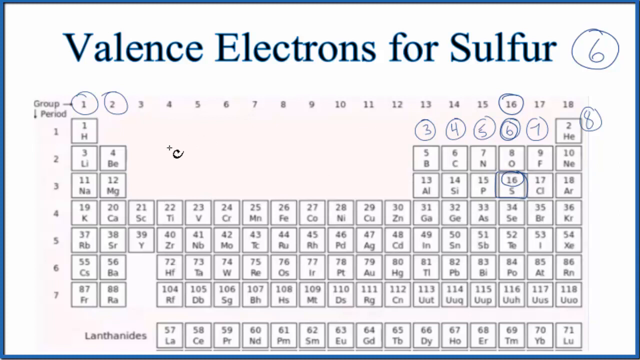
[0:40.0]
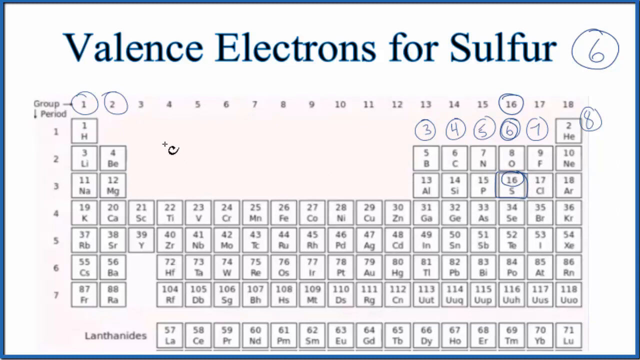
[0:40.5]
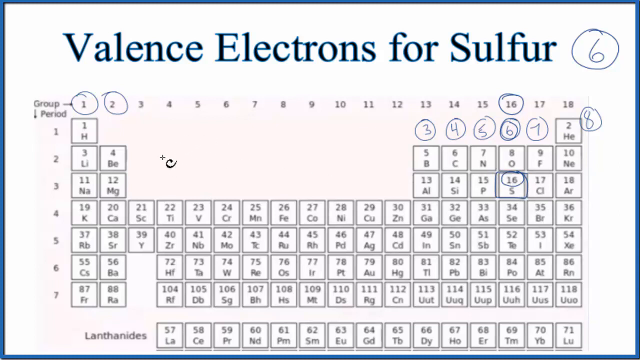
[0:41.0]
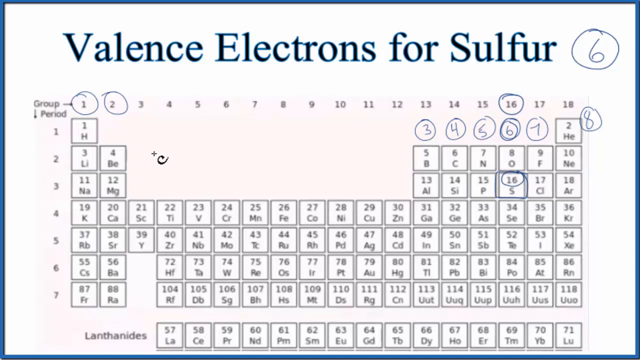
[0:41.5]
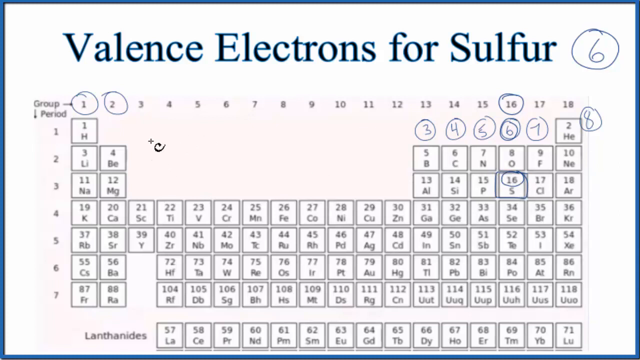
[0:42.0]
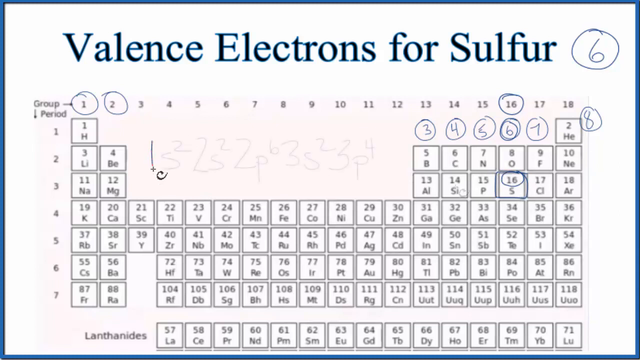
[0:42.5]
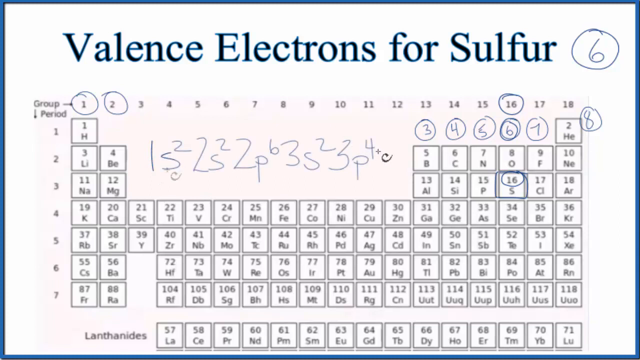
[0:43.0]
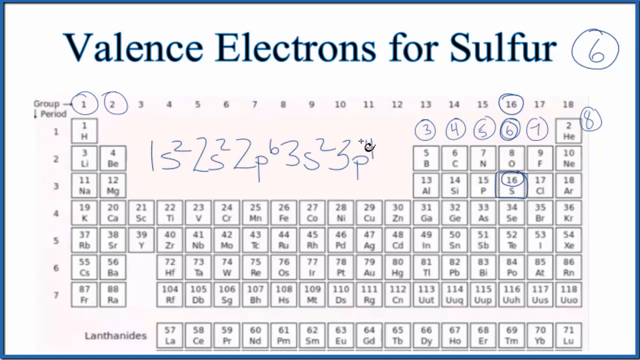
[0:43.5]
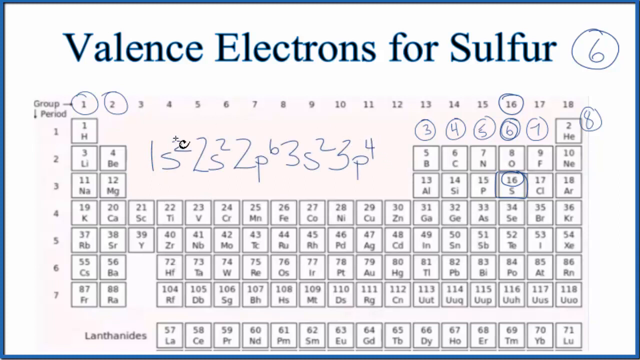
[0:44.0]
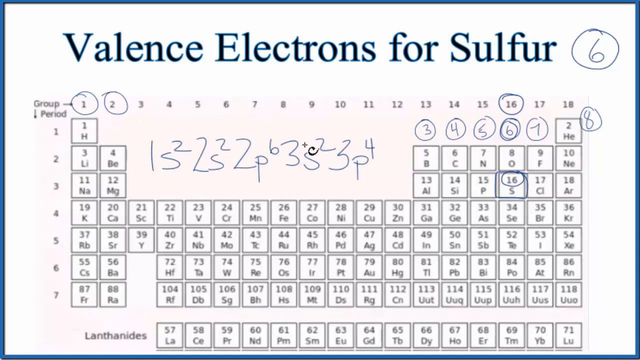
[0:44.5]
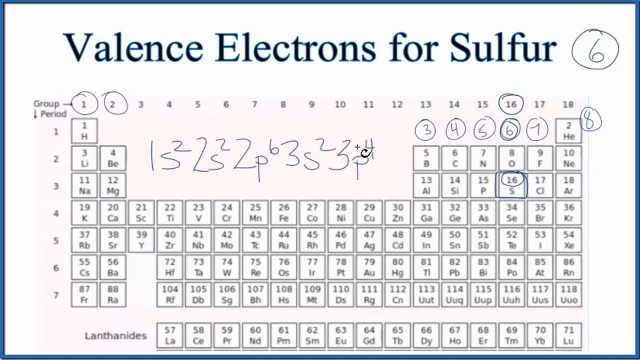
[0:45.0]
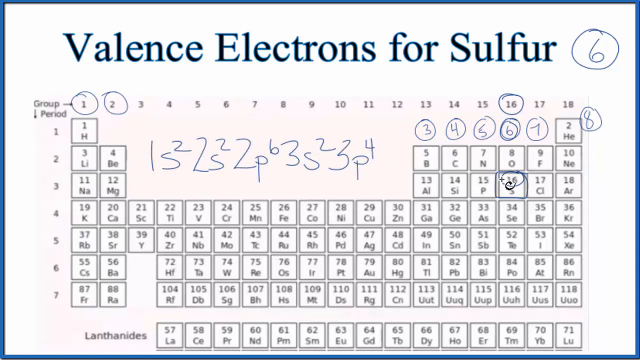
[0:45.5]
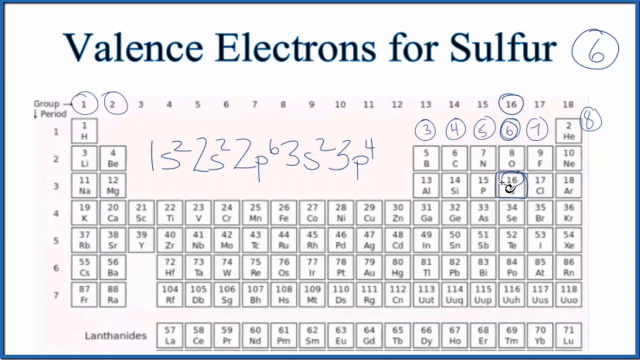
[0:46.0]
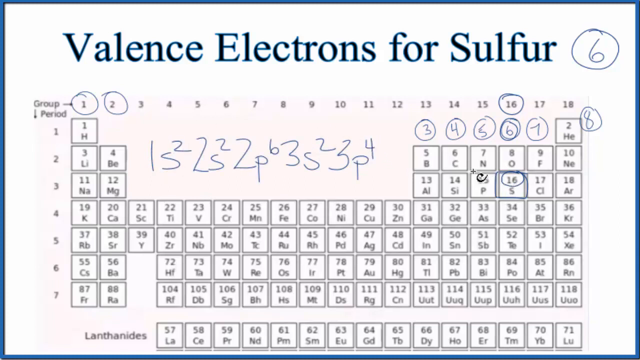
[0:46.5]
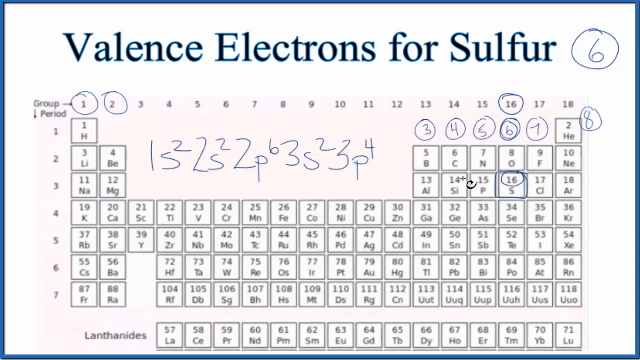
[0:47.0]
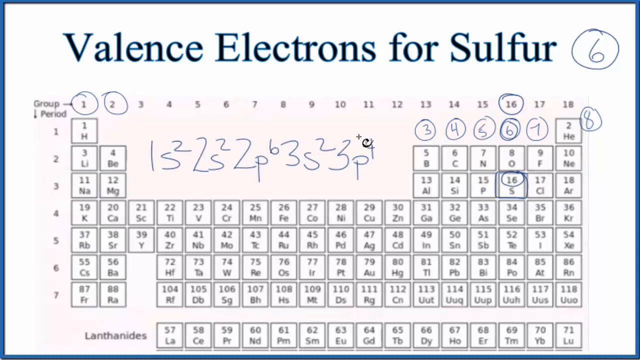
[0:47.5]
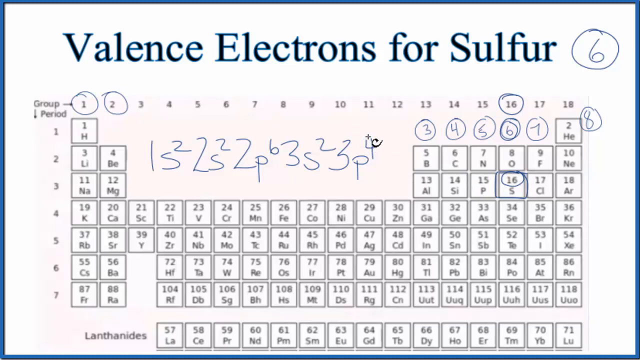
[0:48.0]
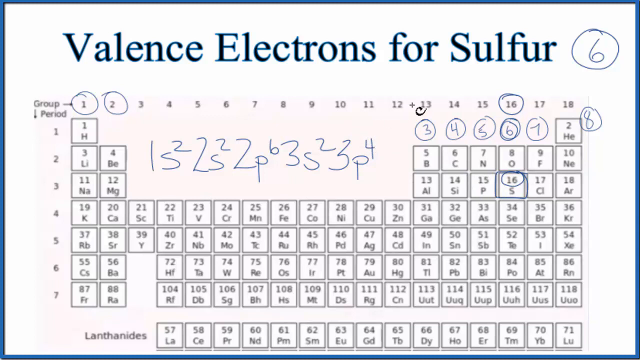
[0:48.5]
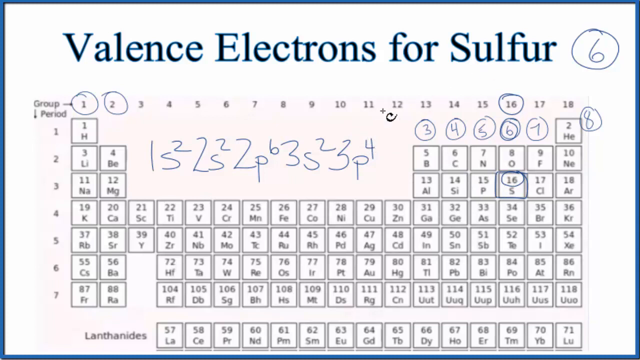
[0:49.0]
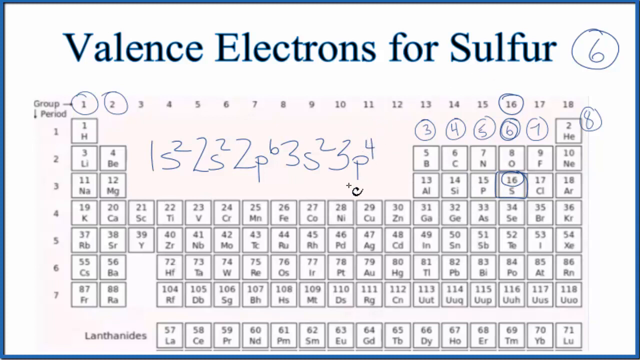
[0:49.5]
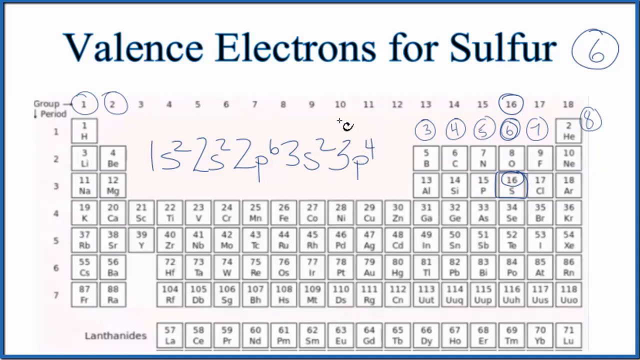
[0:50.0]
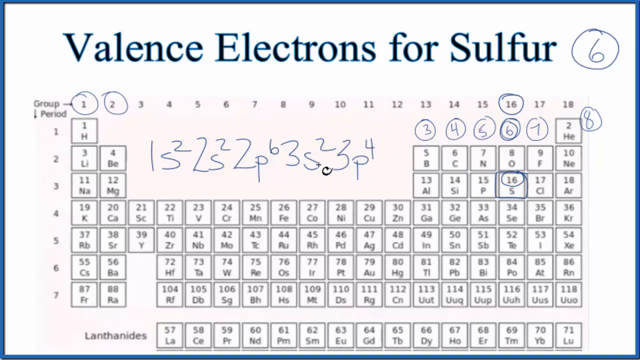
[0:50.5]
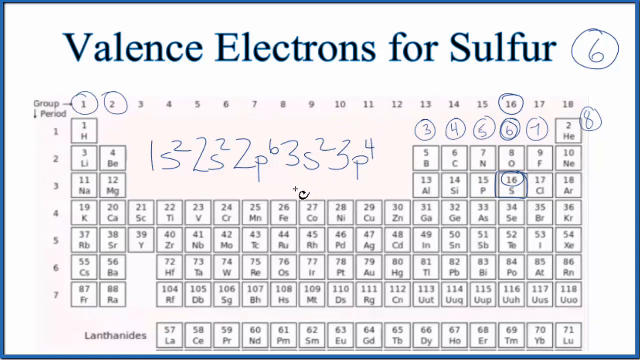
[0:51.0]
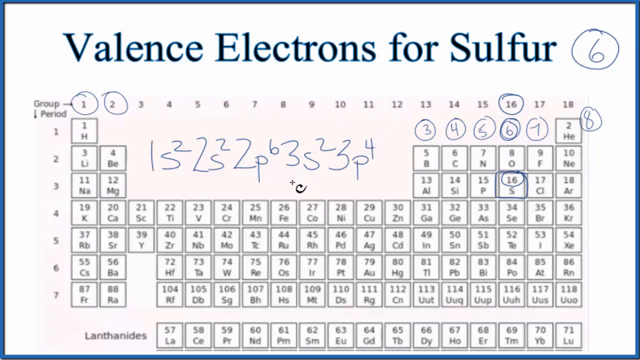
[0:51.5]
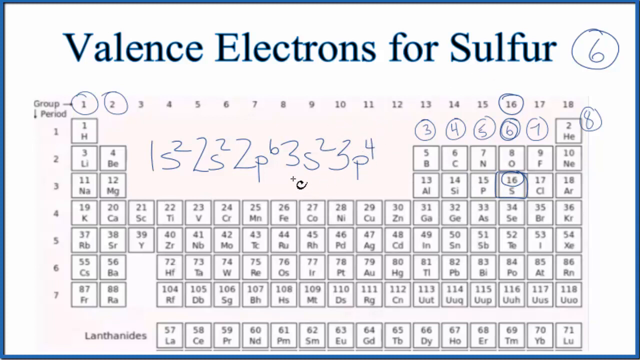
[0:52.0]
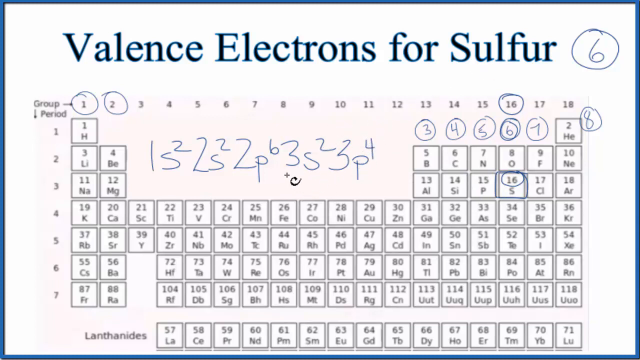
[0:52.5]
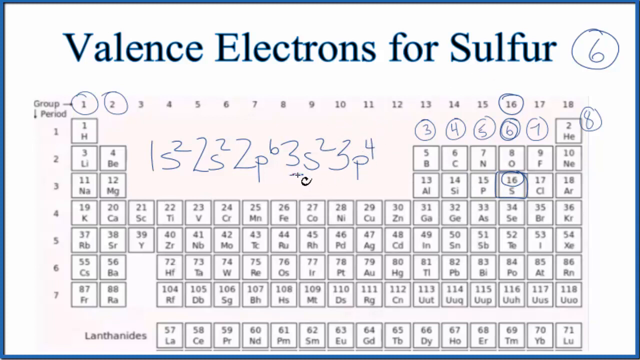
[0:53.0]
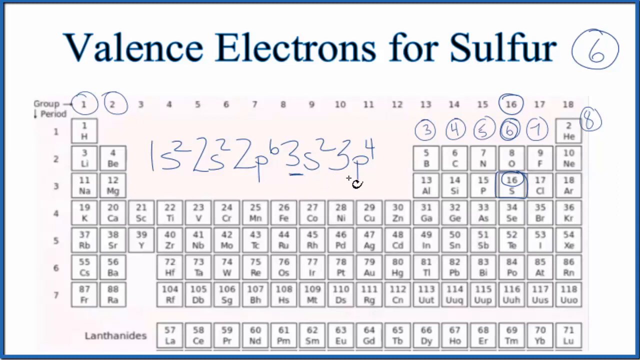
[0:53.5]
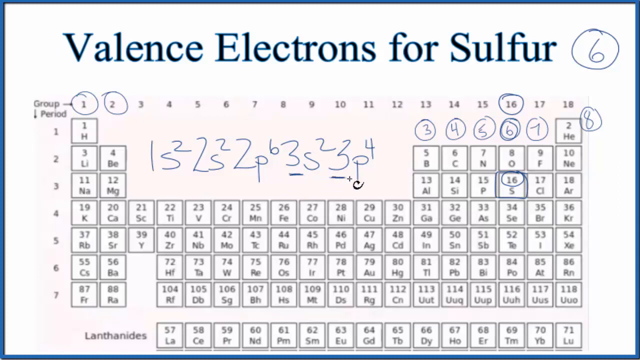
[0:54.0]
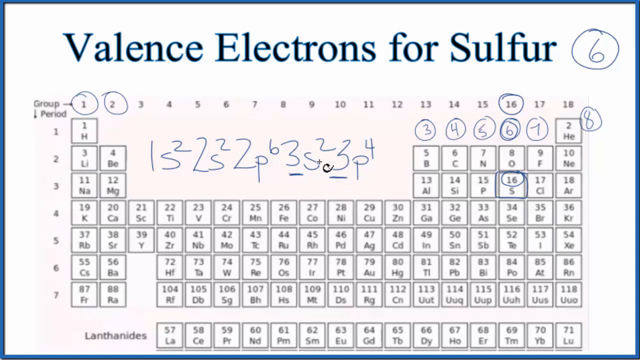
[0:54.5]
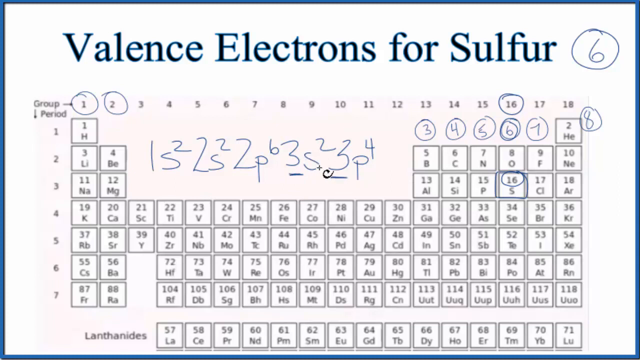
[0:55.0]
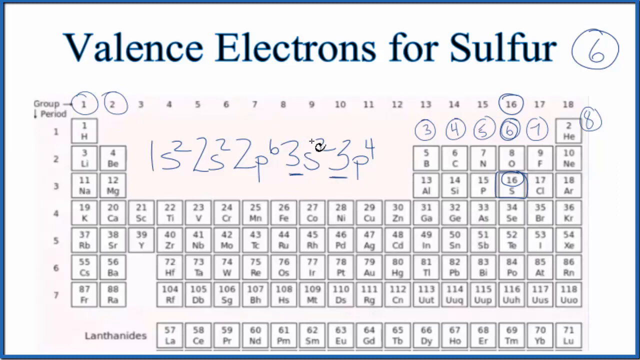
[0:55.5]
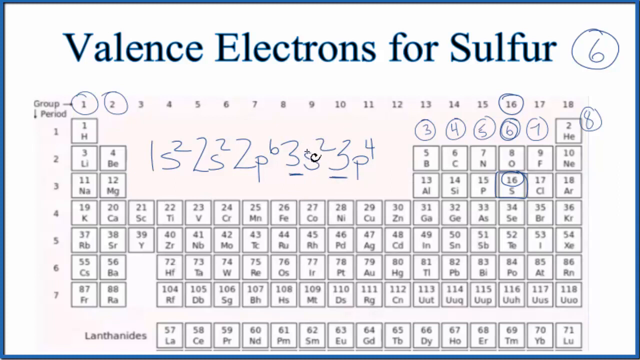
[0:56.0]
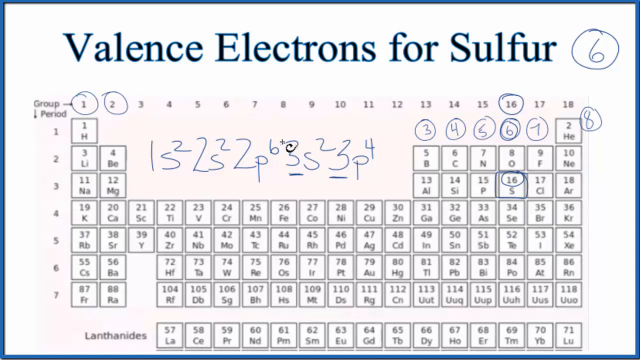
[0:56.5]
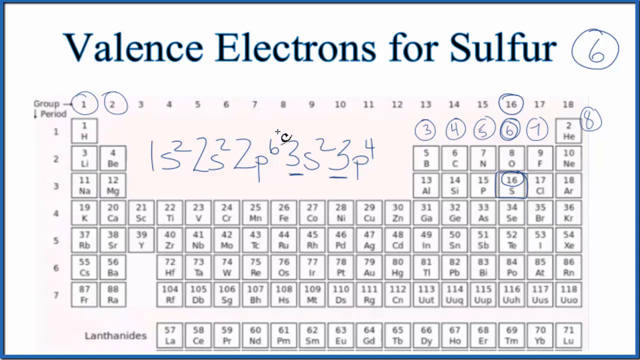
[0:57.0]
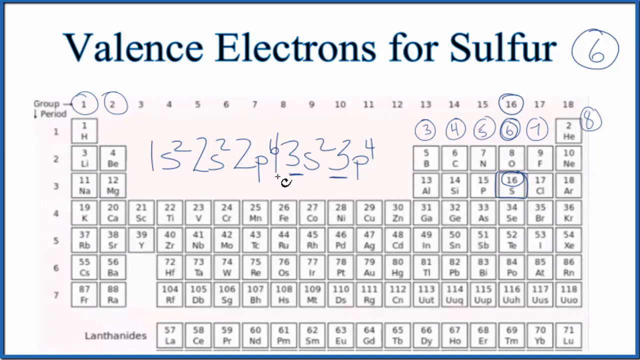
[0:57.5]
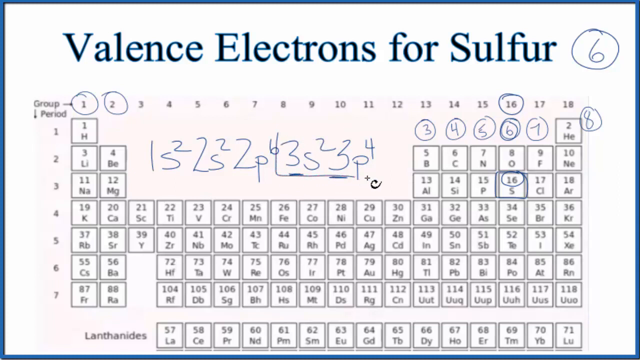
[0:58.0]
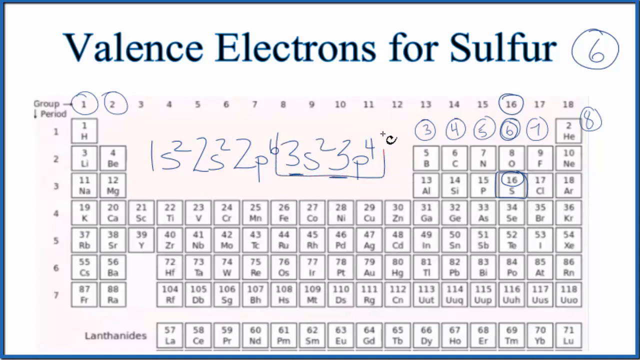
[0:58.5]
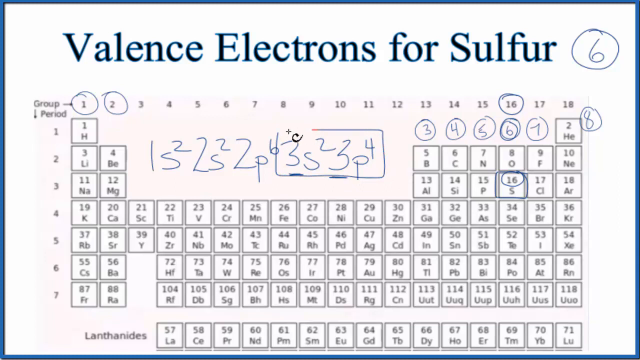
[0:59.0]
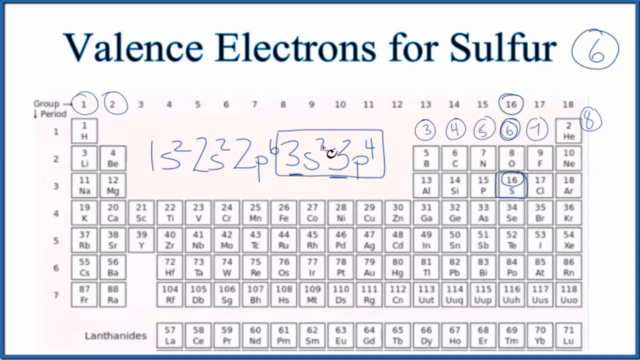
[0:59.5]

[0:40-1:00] A title at the top reads "valence electrons for sulfur" above a periodic table. At the top, written with a pen, is 1s2 2s2 2p6 3s2 3p4. The cursor, a plus sign with a fancy letter C, moves over to the 16. A number is drawn under the 3 and the other 3, and then a box is drawn around the 3s2 3p4 section. The periodic table has titles at the side: "group" runs across the top, numbered 1 through 18, and "period" runs down the side. Each box in the table has a number along with letters; sulfur is number 16 and has an S.